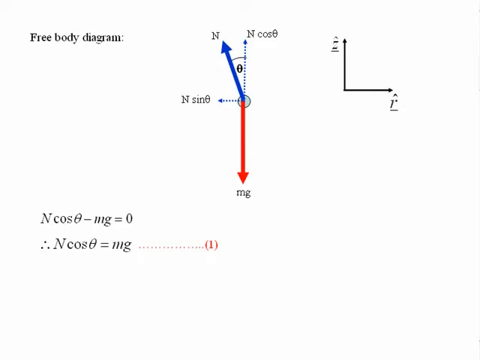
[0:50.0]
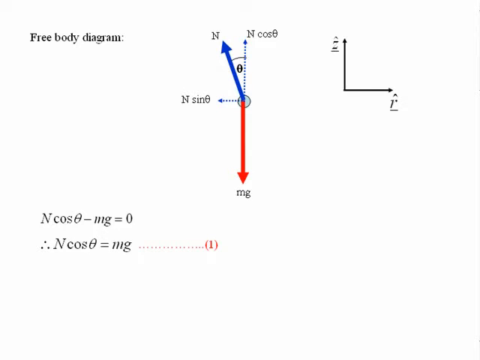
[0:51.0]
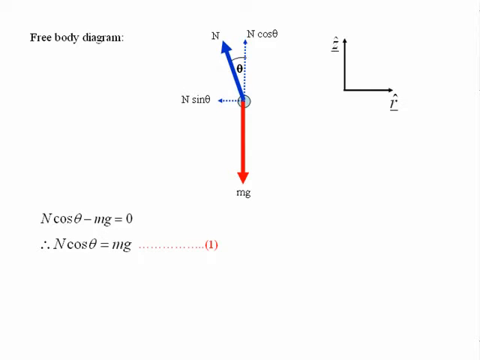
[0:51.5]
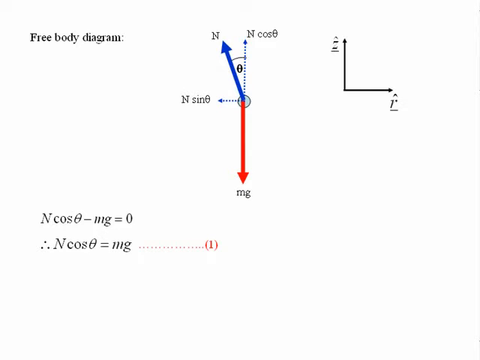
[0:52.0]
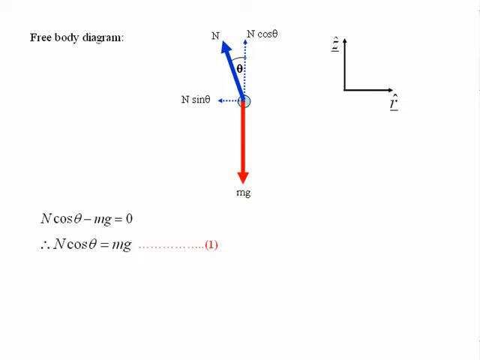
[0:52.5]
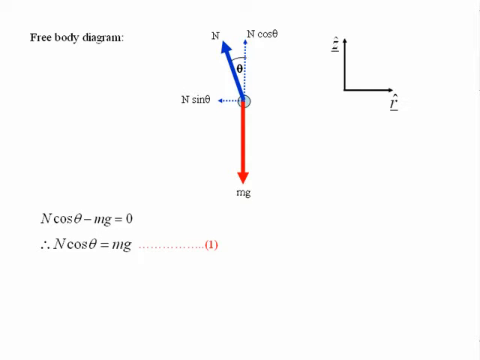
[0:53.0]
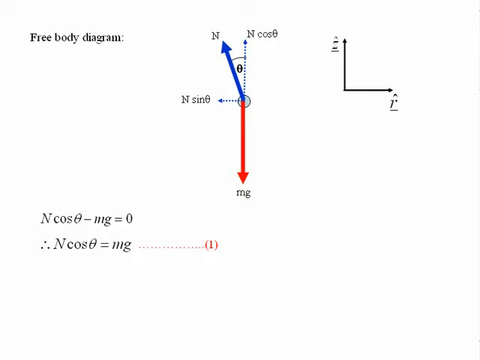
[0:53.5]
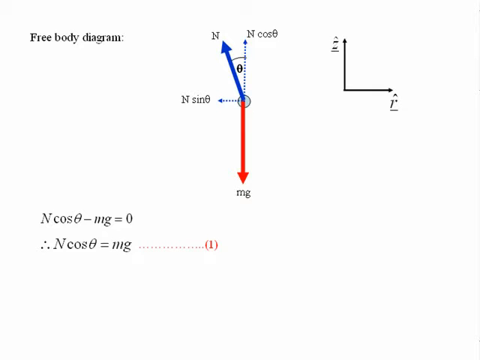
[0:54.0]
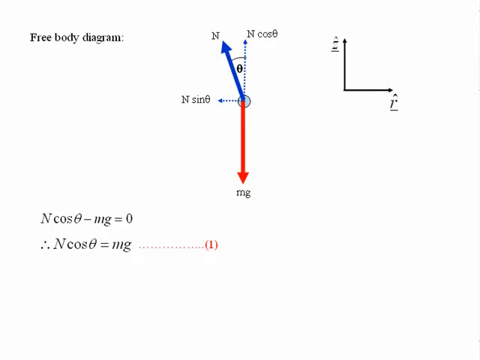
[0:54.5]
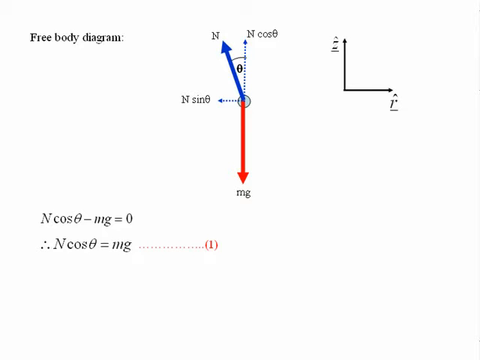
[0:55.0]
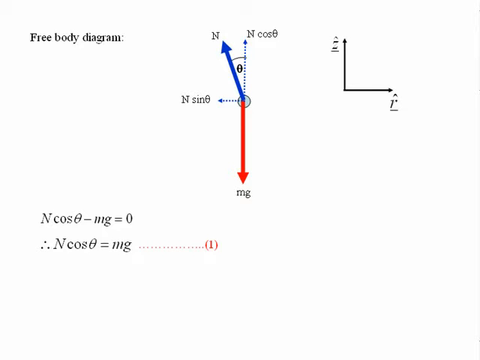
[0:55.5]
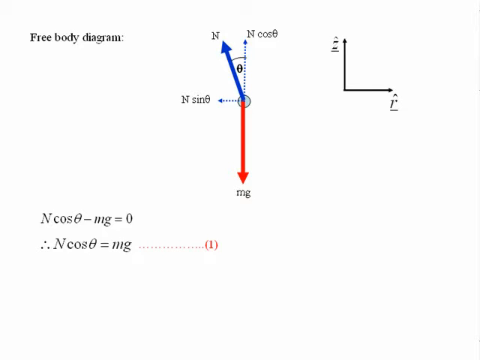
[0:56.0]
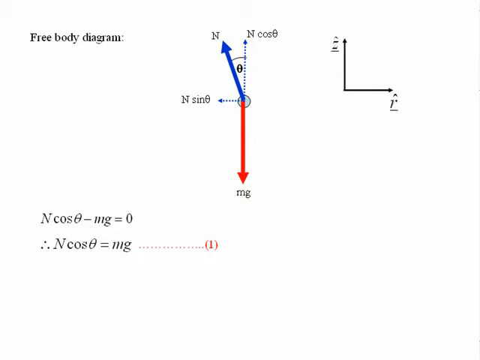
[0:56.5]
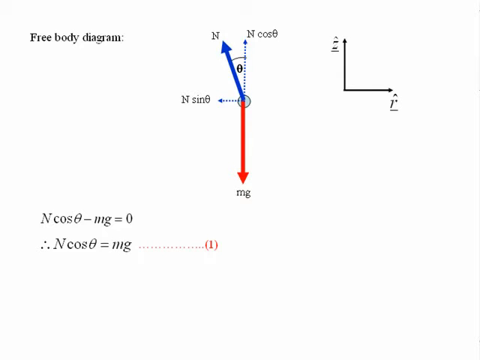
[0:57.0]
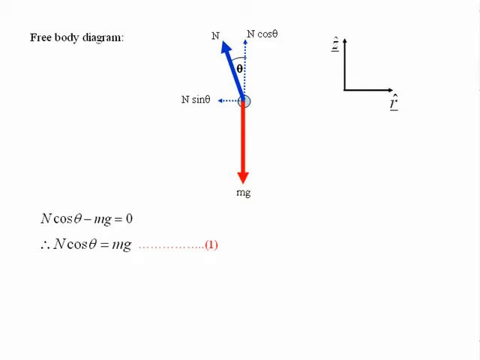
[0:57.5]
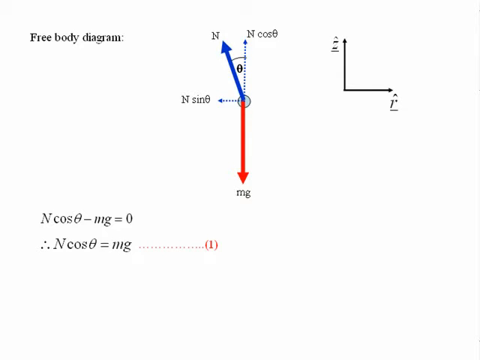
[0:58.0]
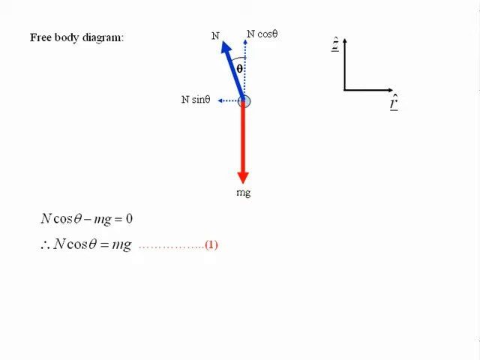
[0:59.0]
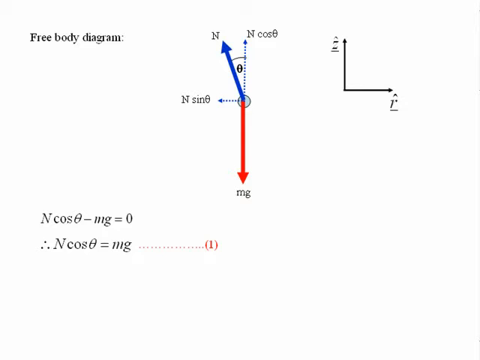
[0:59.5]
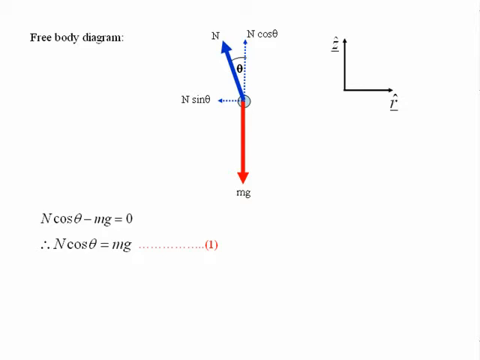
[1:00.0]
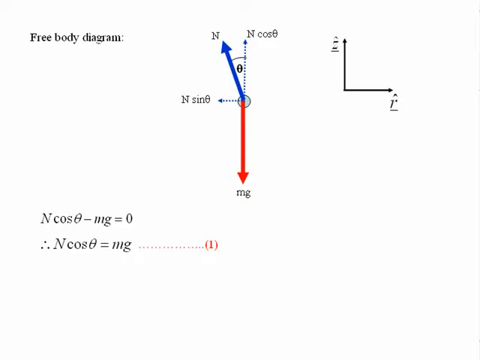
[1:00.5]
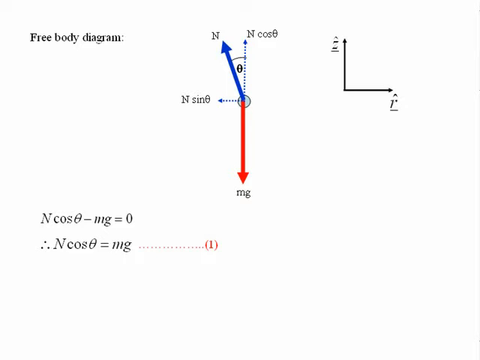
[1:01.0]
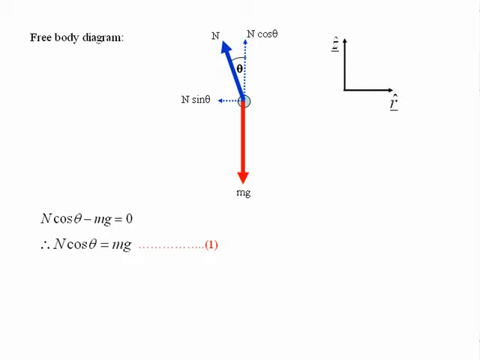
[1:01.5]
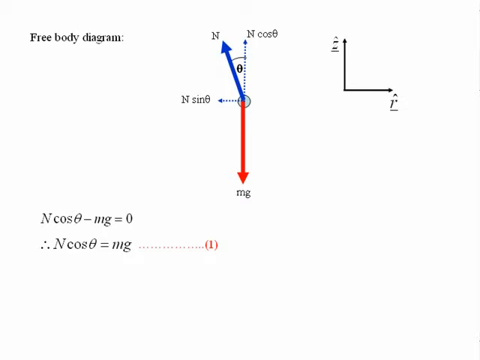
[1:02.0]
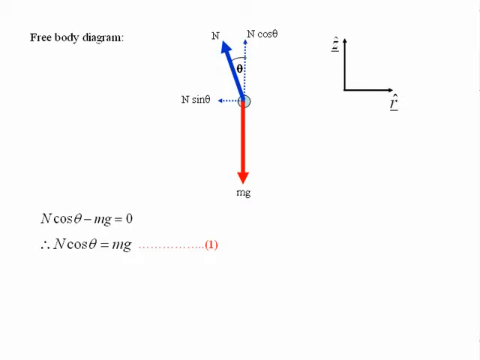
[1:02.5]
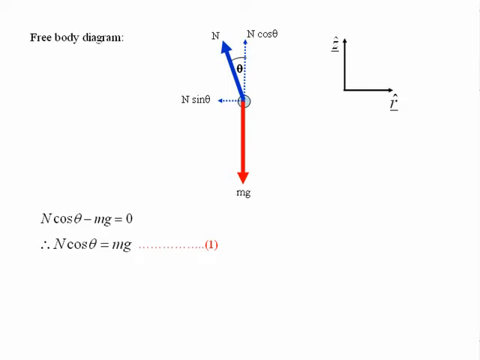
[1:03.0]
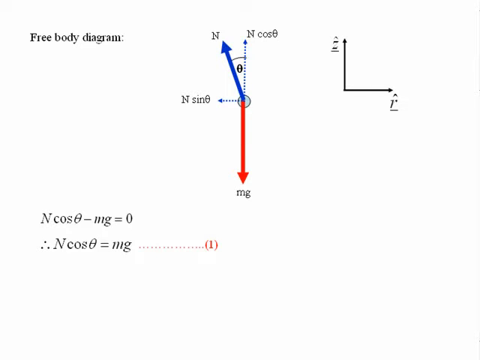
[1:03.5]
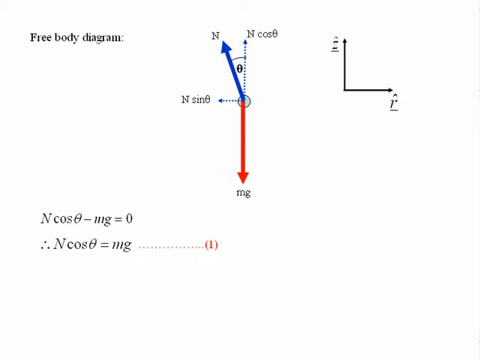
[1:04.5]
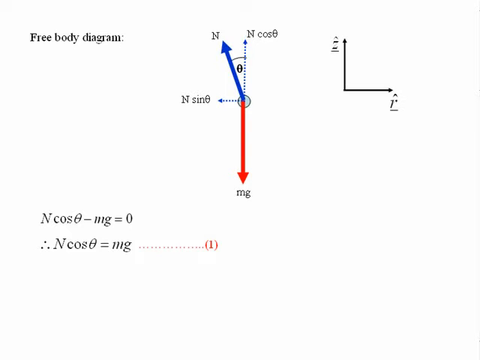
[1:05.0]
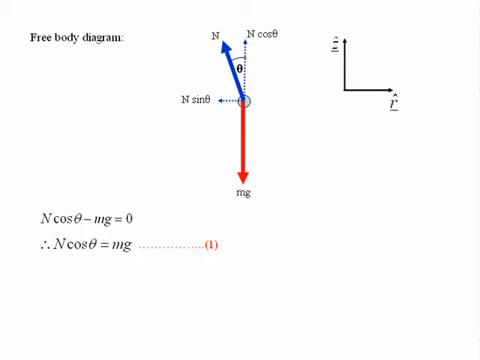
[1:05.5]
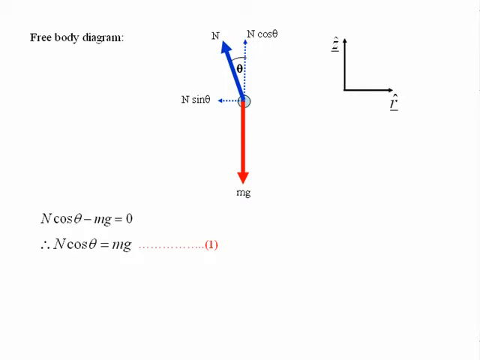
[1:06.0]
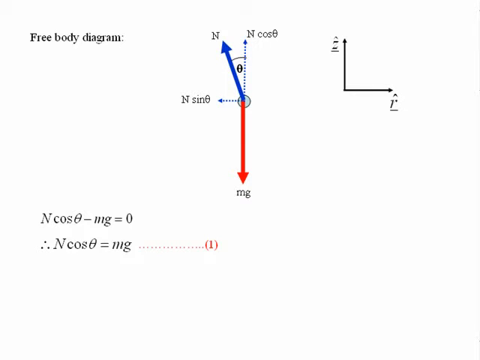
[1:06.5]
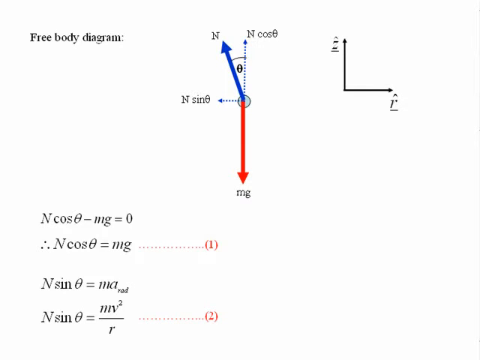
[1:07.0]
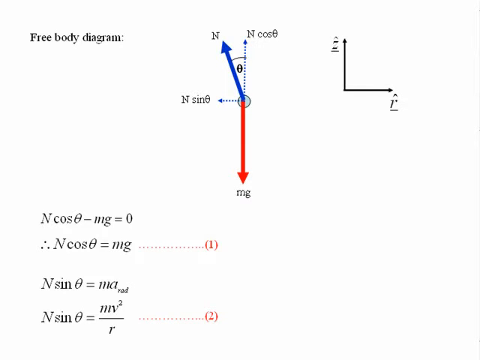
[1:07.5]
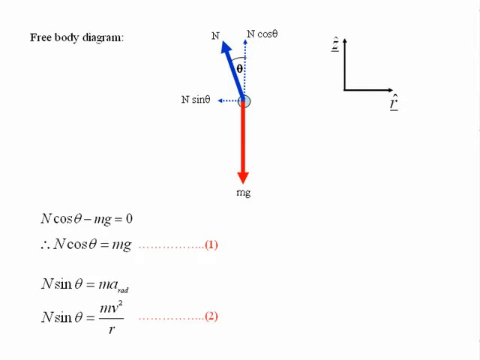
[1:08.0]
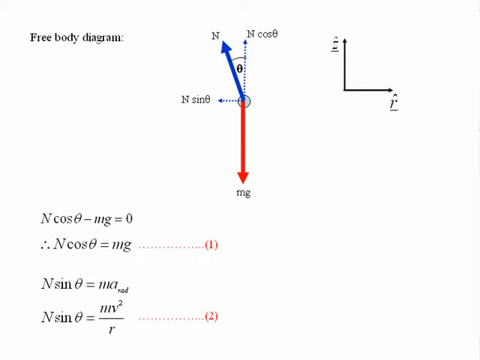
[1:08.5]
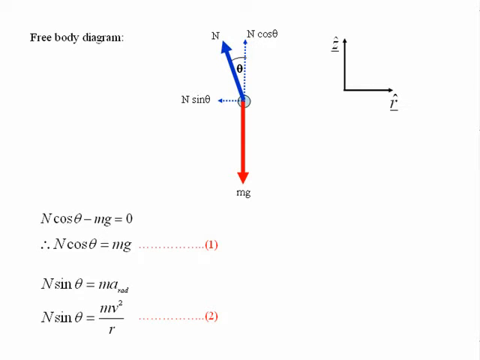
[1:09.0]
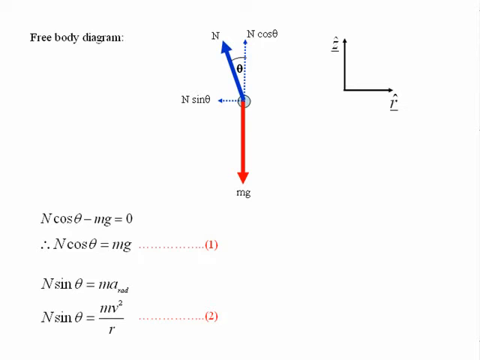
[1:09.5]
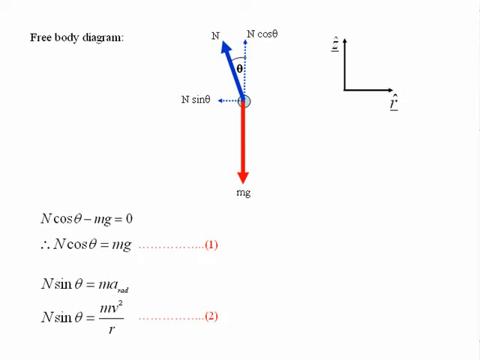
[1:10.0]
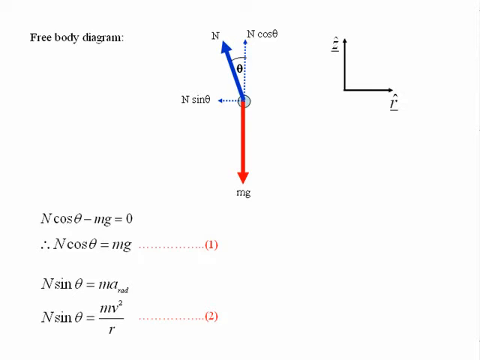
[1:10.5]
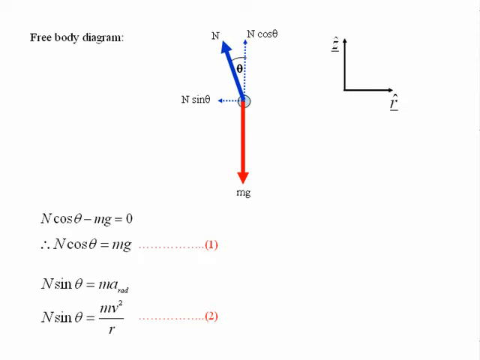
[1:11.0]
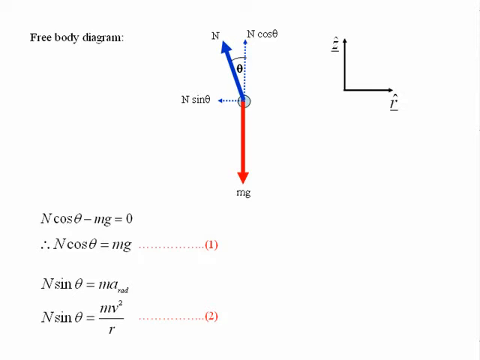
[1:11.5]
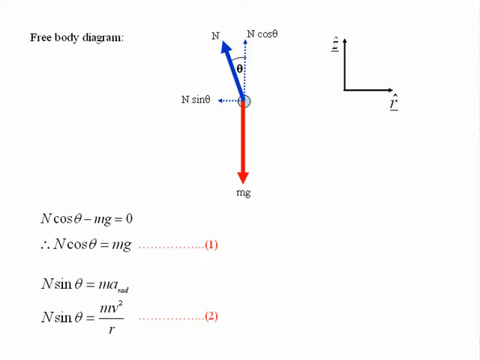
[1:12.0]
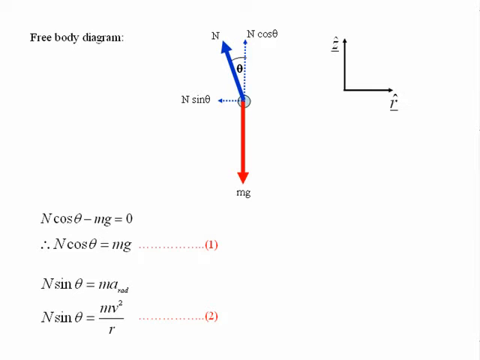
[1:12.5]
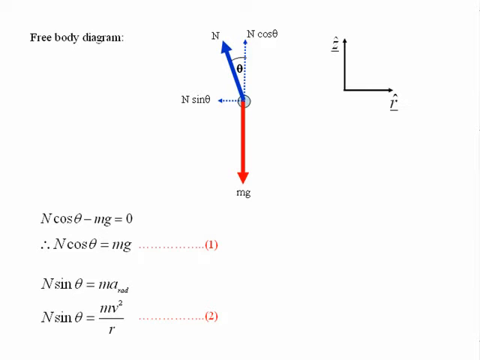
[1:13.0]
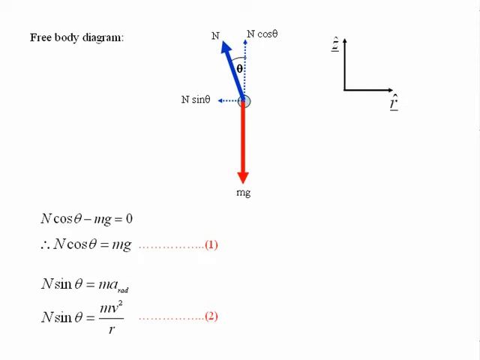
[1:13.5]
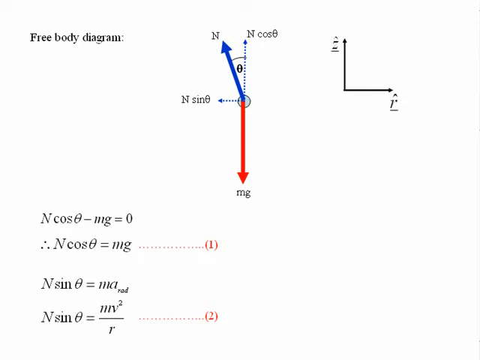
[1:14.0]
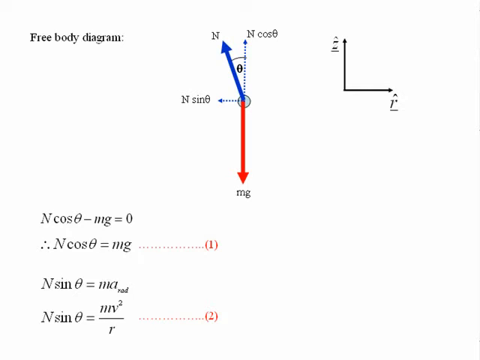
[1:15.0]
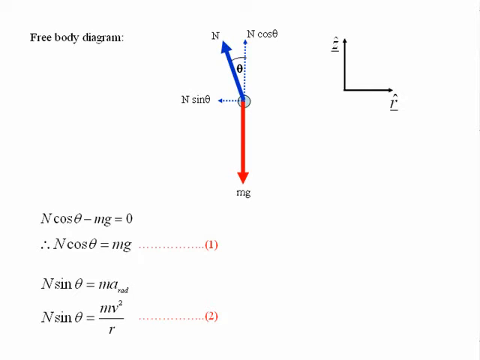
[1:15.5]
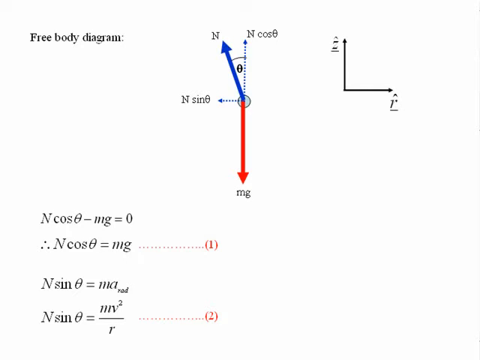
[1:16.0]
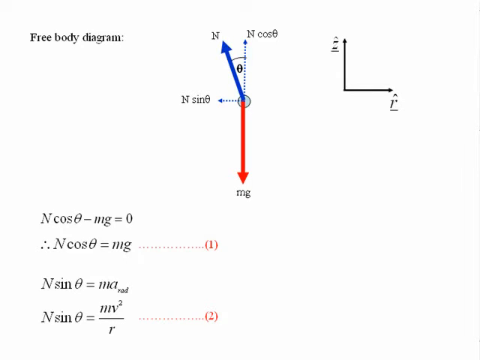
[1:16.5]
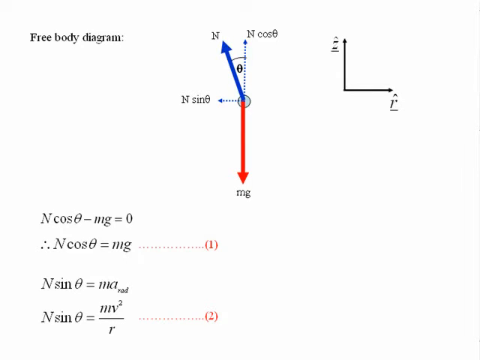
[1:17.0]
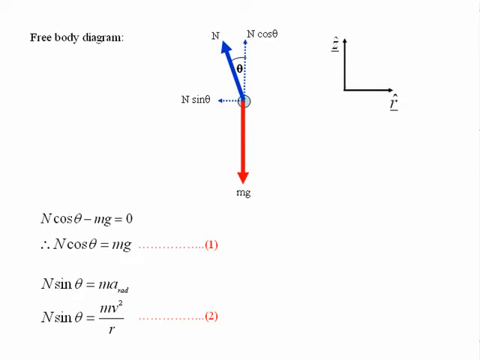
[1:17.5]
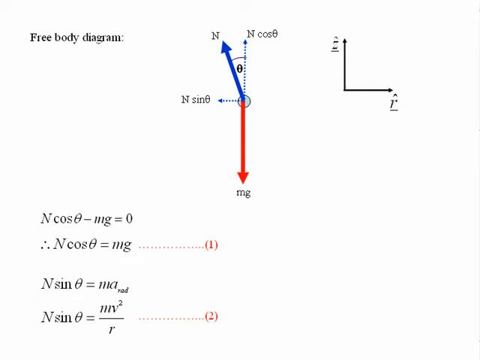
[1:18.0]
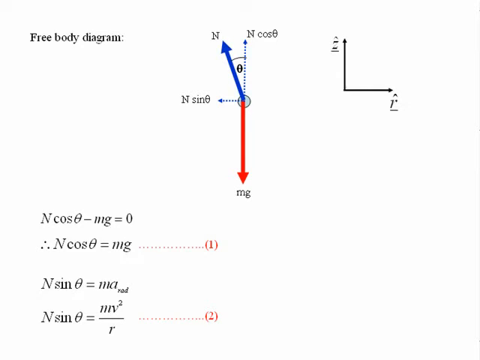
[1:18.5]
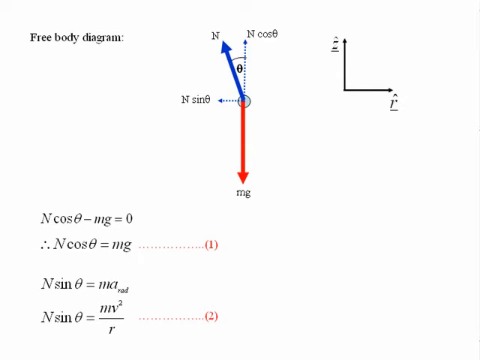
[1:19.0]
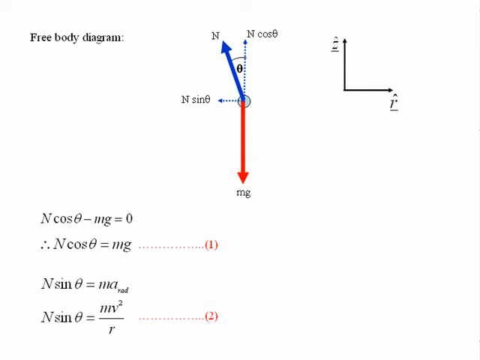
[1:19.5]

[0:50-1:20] The same screen of angles continues, and a new equation appears: n sin theta equals ma, and n sin theta equals mv squared over r. This new equation is the only change; there are no screen changes and no humans or animals. There is a red arrow pointing down and a blue arrow pointing sort of northeast, with sort of dotted arrows forming angles between these main colored arrows, and some arrows pointing up and right in the top right of the screen.